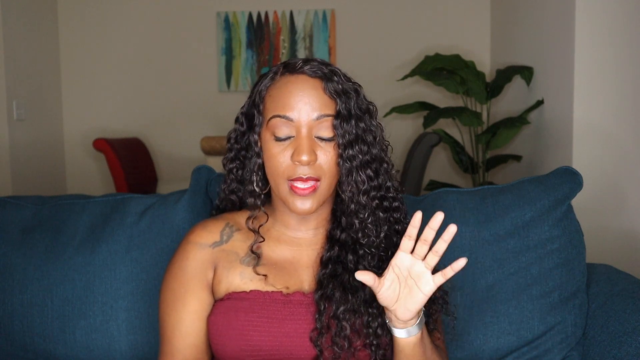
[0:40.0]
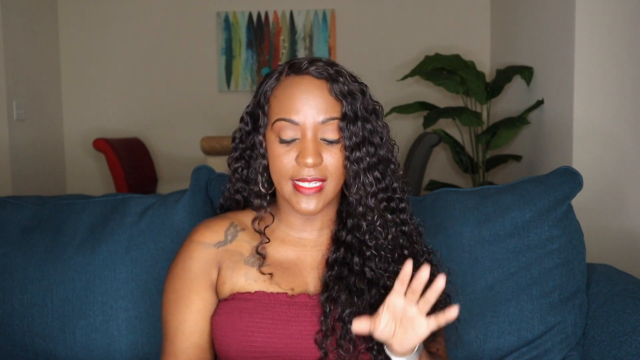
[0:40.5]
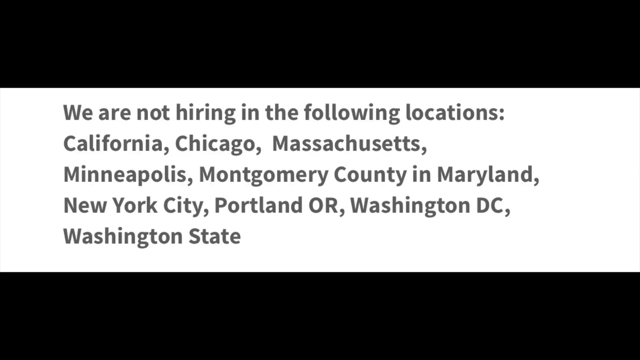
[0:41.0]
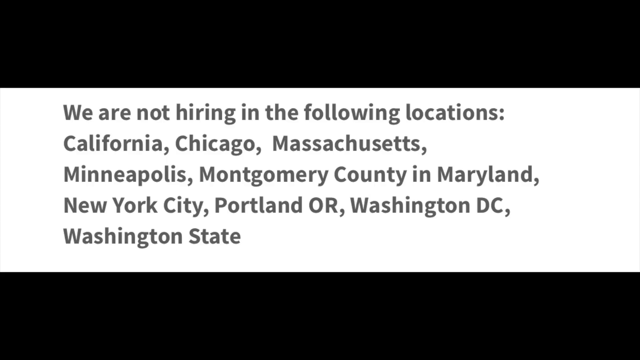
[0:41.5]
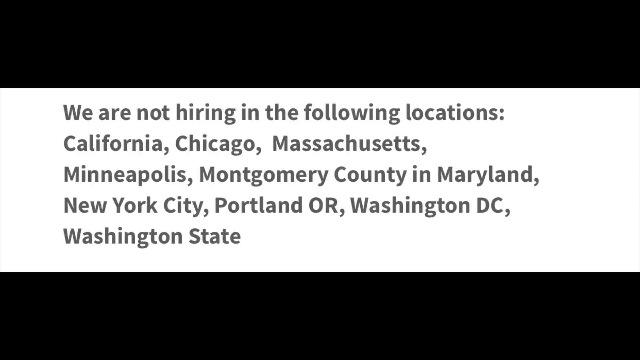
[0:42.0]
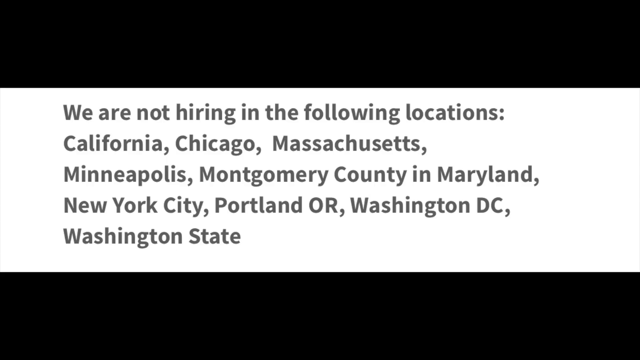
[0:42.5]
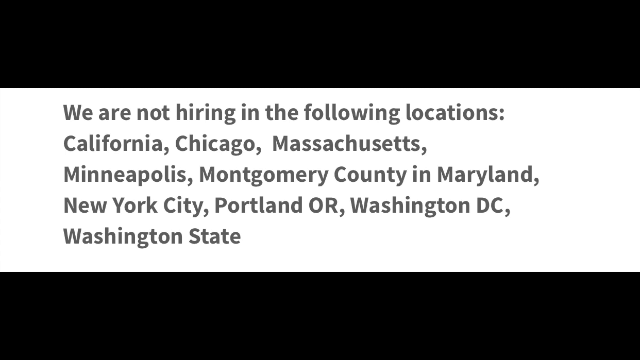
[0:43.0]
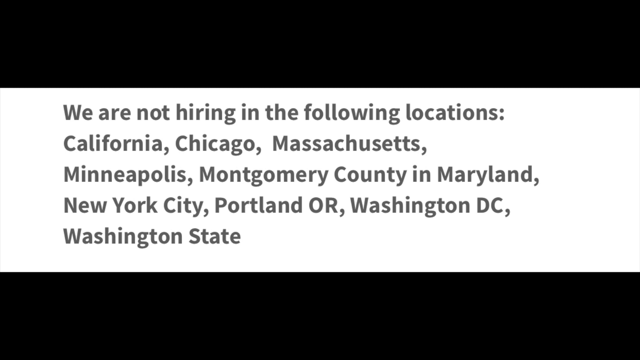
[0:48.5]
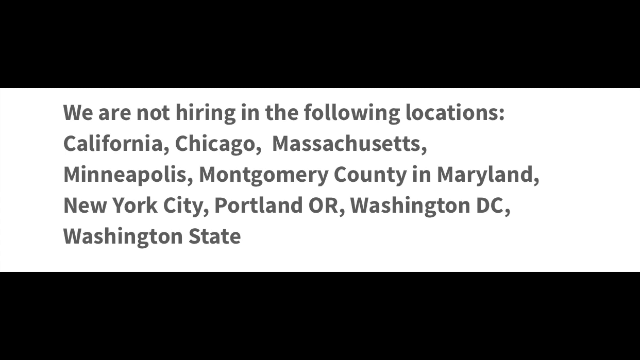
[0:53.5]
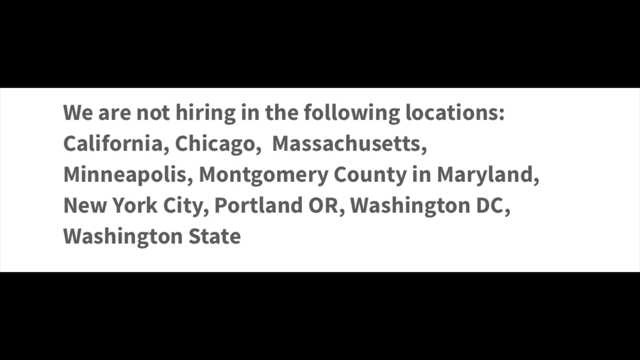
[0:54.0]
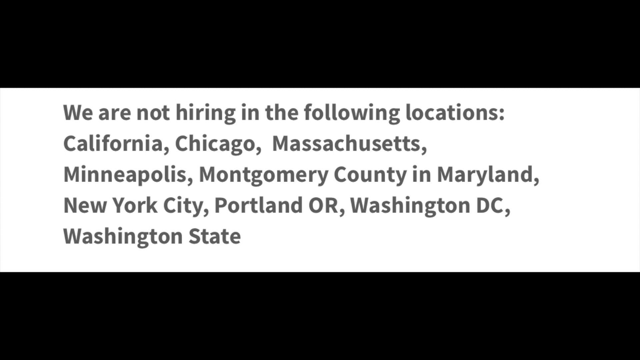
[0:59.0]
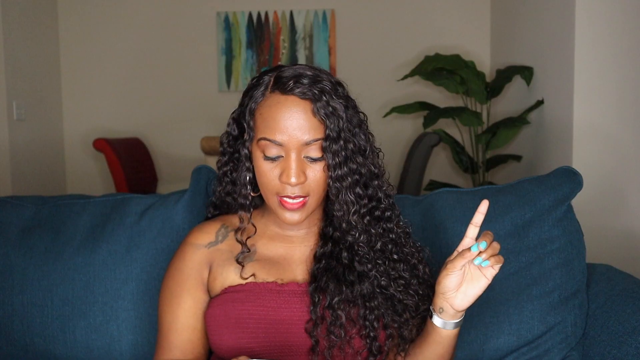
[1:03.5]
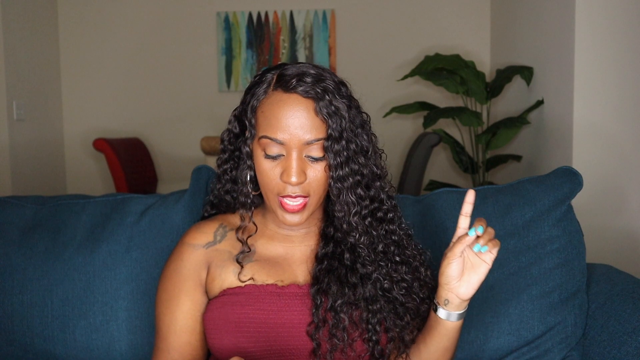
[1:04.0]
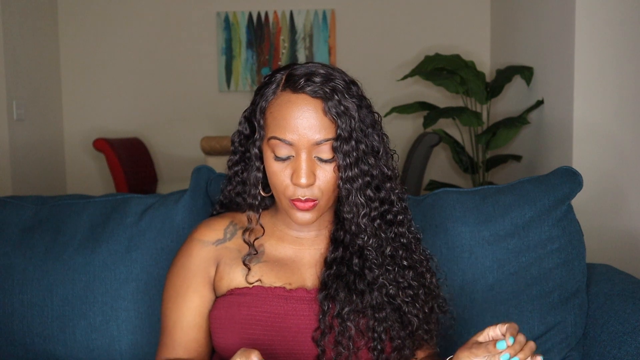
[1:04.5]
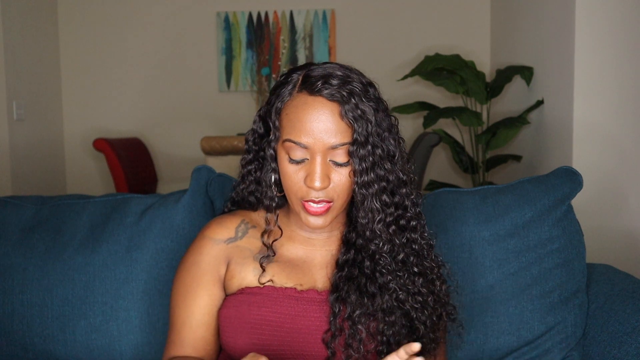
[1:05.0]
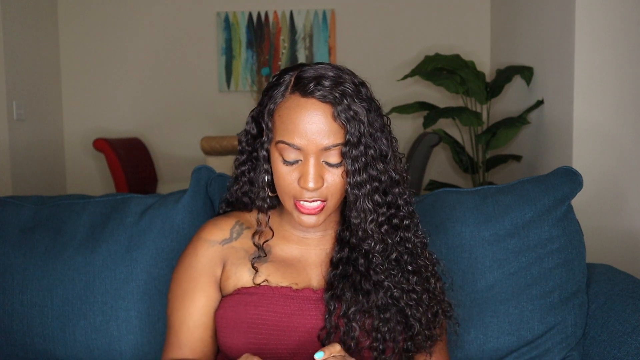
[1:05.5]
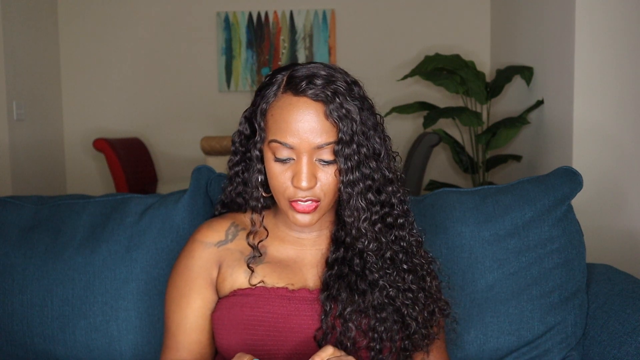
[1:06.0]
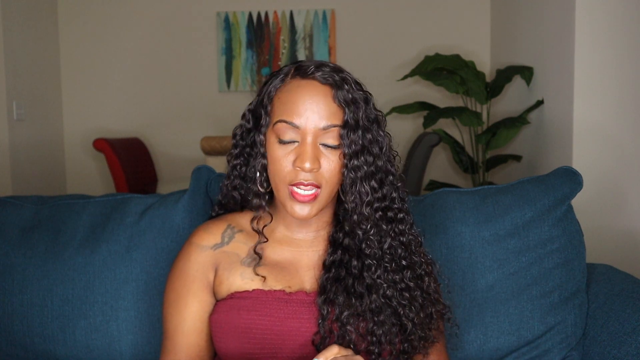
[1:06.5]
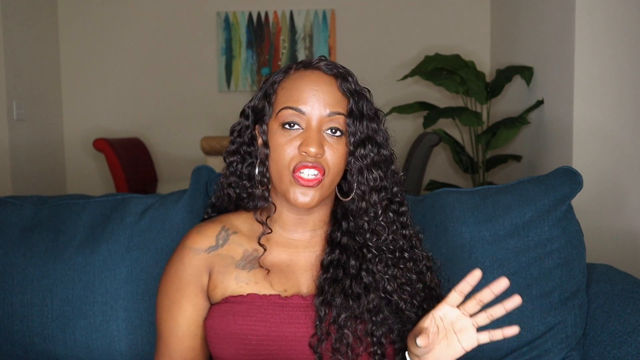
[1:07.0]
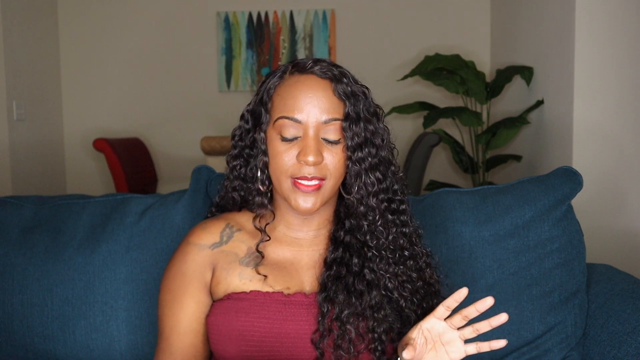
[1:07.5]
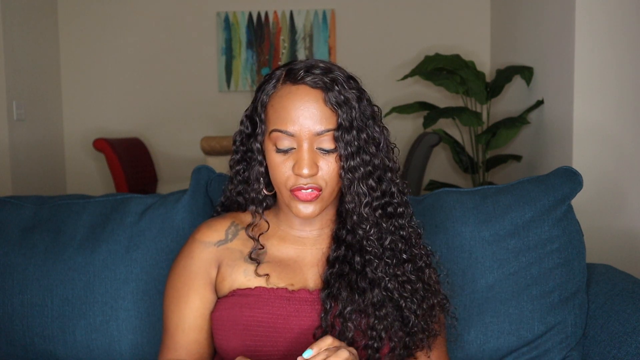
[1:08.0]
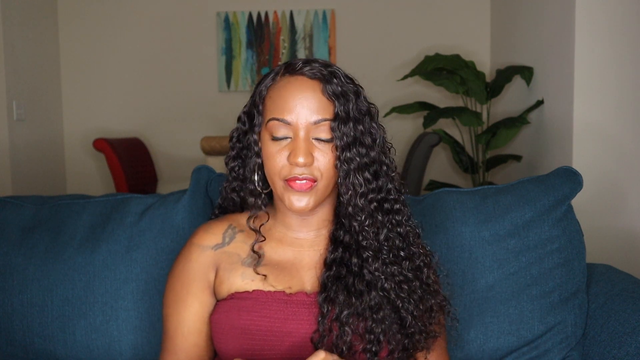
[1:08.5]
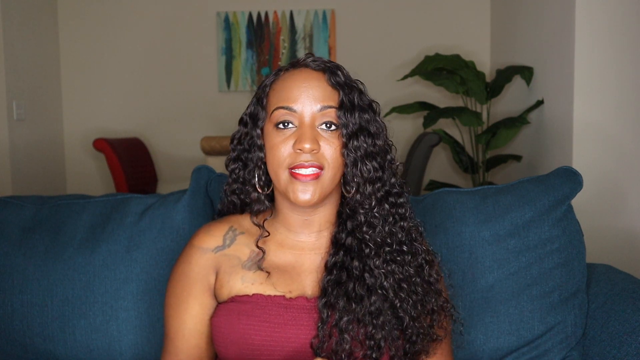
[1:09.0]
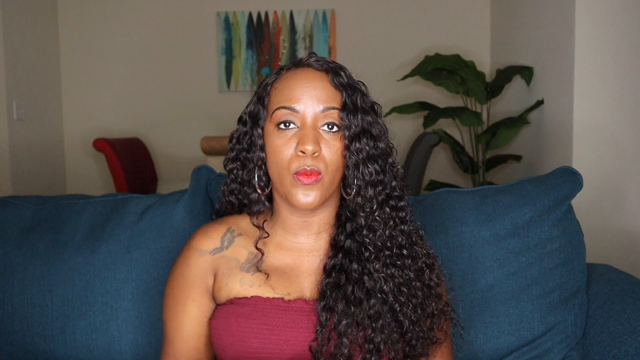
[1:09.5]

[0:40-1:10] Someone at a desktop computer is typing, with hands on the mouse and the keyboard. A description at the start reads "live relation work from home jobs and more." Next, a lady appears, seated on a sofa in a home setting, evident from the sofas, tables, the painting on the wall and the flowers. Links at the bottom lead to Facebook and Instagram.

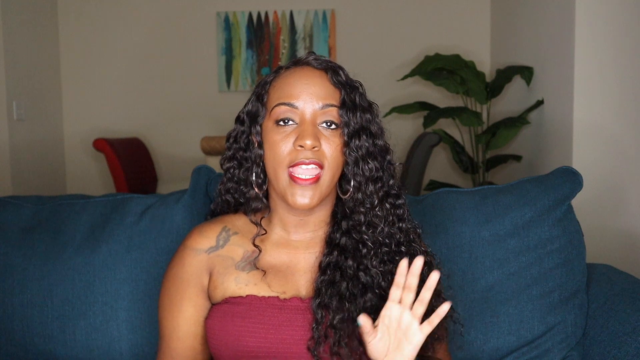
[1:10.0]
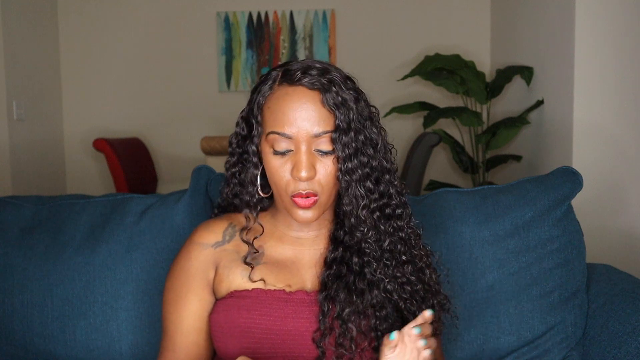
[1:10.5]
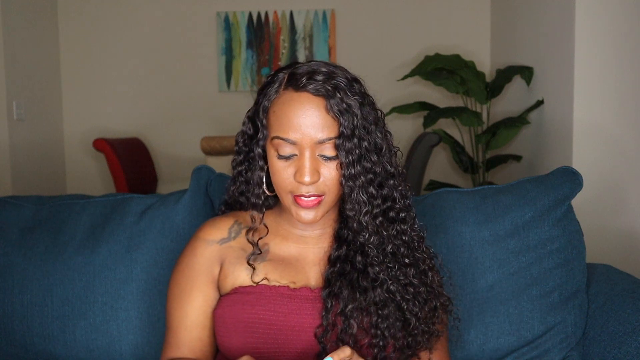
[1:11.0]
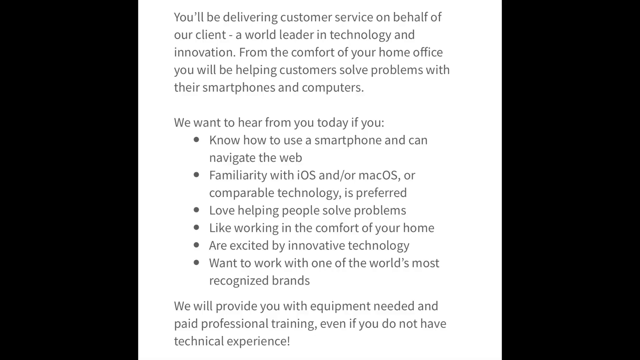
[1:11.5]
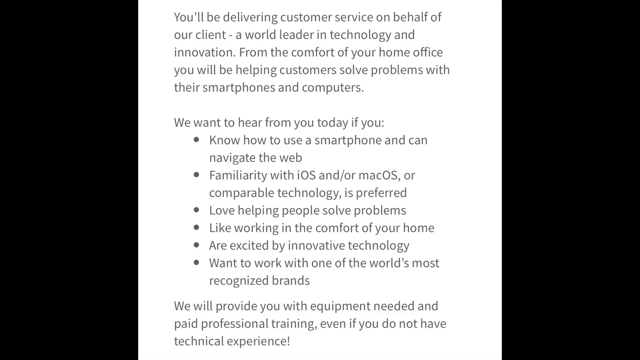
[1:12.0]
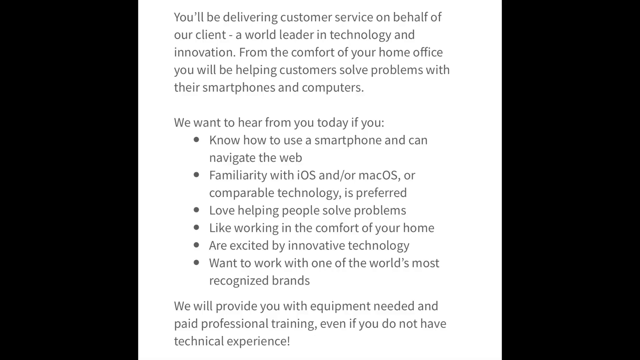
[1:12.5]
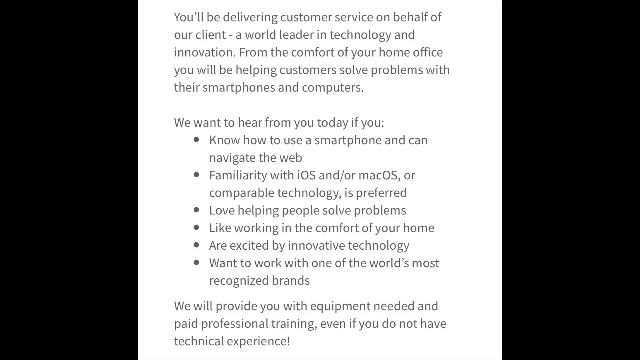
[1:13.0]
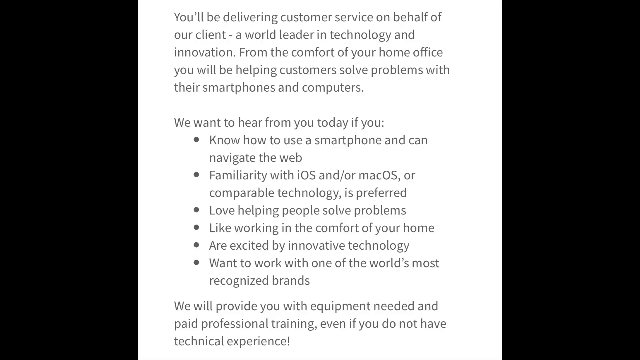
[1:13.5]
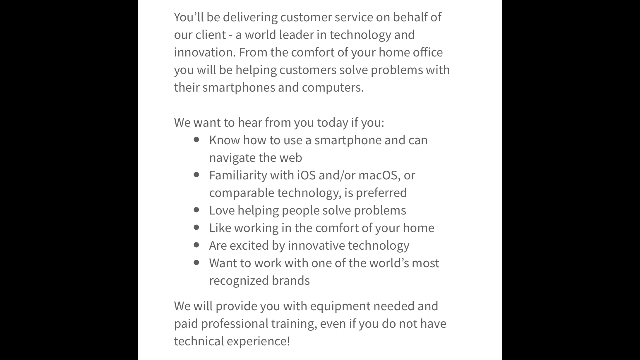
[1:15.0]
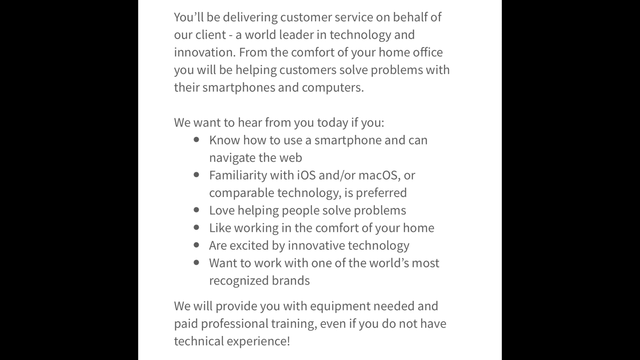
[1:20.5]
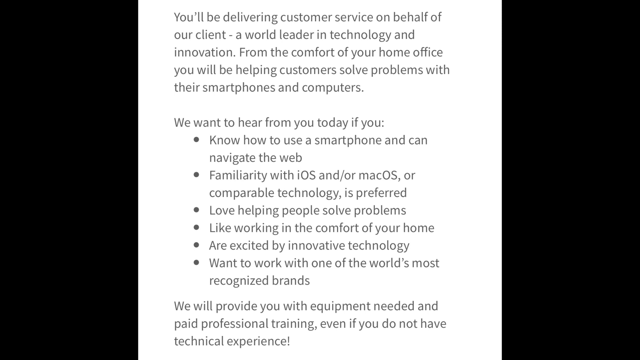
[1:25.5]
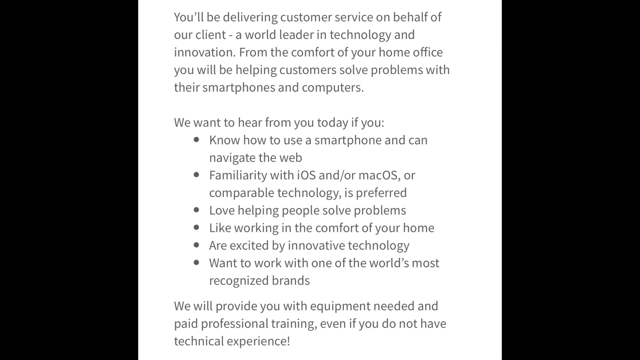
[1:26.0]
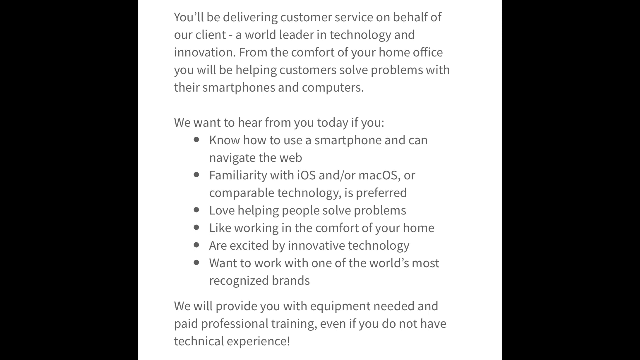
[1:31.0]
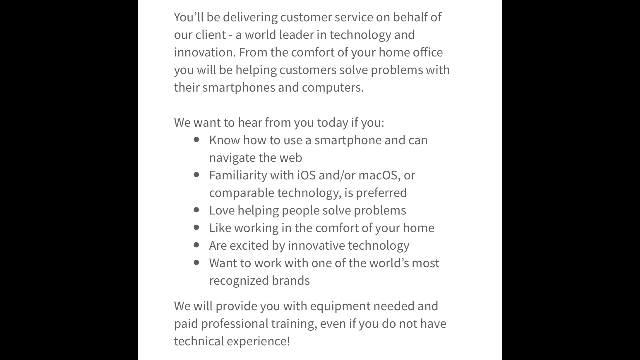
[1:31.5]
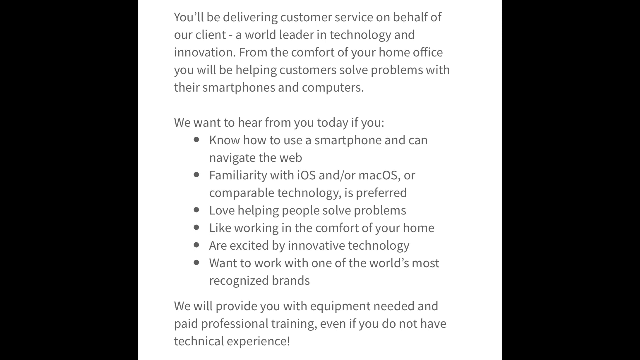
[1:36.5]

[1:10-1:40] Bold descriptive words at the start read "love relation, work from home jobs, and more." Someone then types on an Apple MacBook desktop computer; their hands are shown, one on the computer mouse. Next, a lady in a black weave and a maroon dress appears, seated comfortably on a sofa in what appears to be her home, evident from the sofas, chairs, tables, flowers and paintings on the wall. As she continues, a link to Facebook and Instagram is shown.